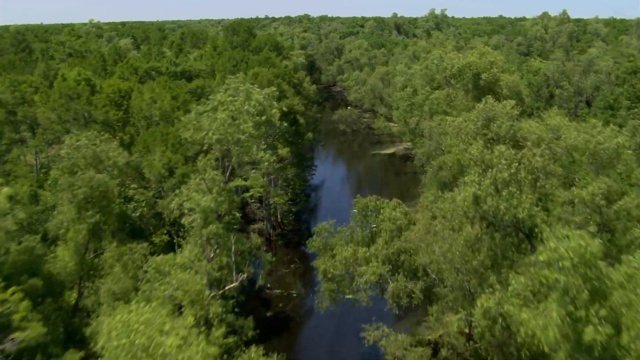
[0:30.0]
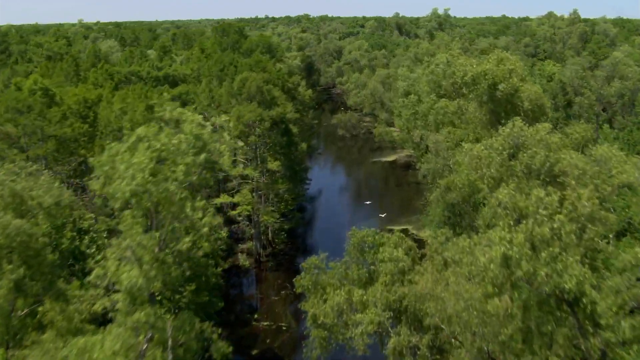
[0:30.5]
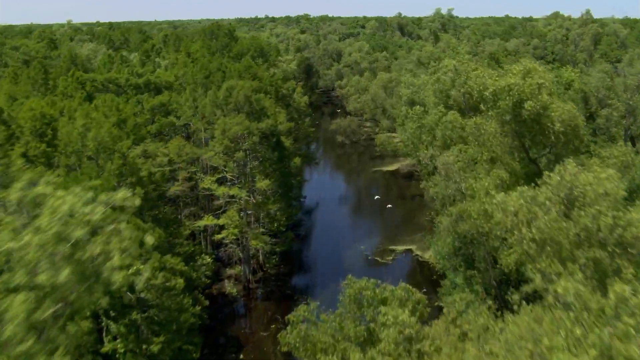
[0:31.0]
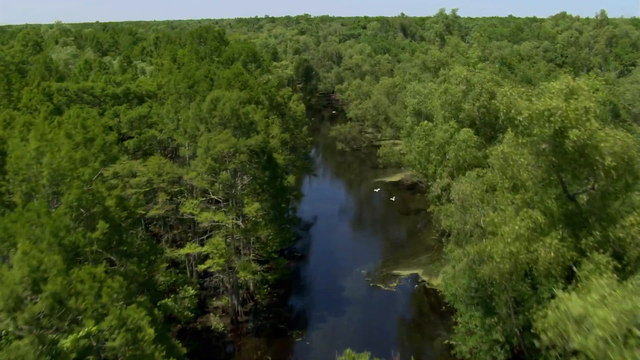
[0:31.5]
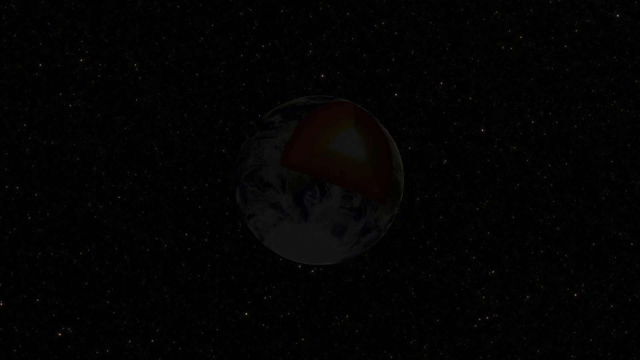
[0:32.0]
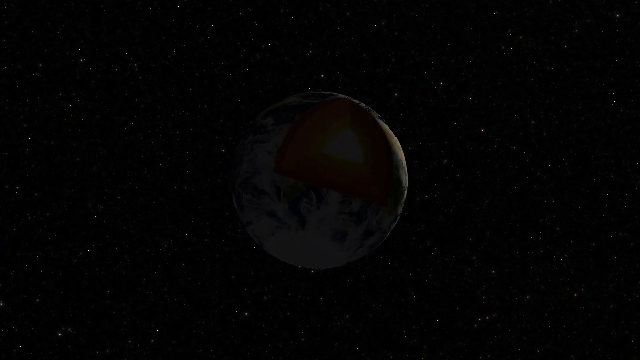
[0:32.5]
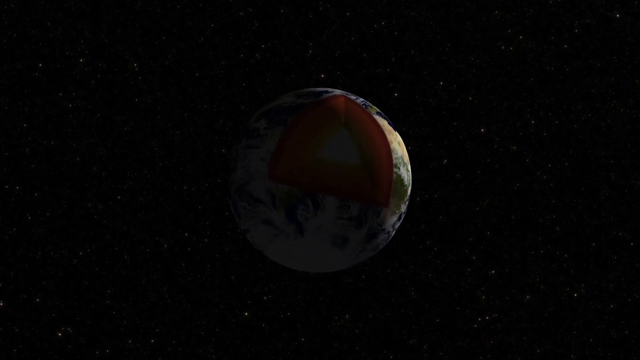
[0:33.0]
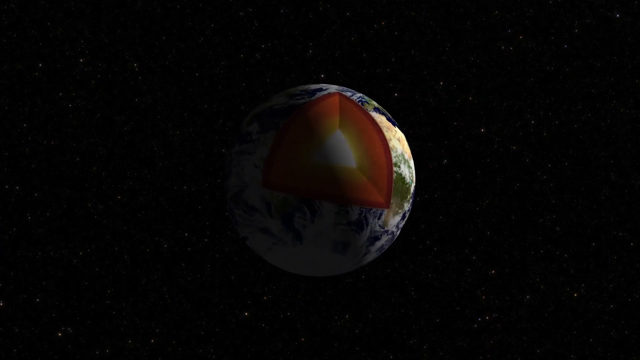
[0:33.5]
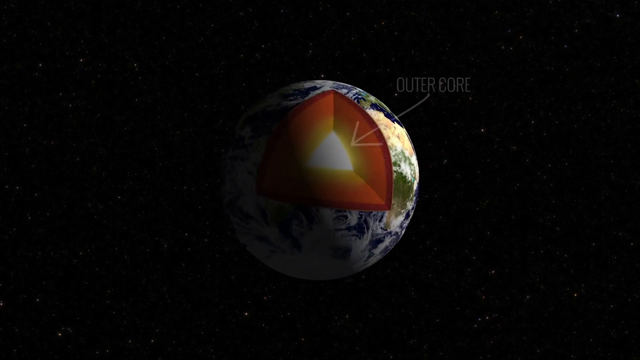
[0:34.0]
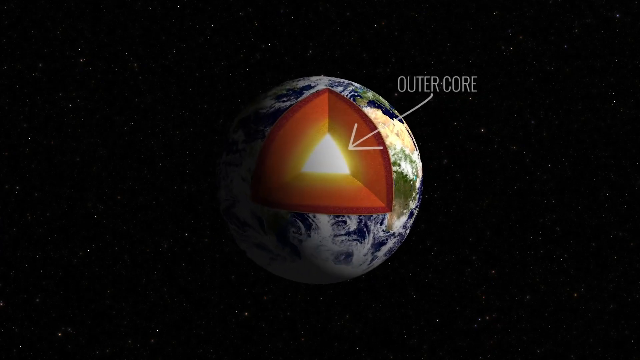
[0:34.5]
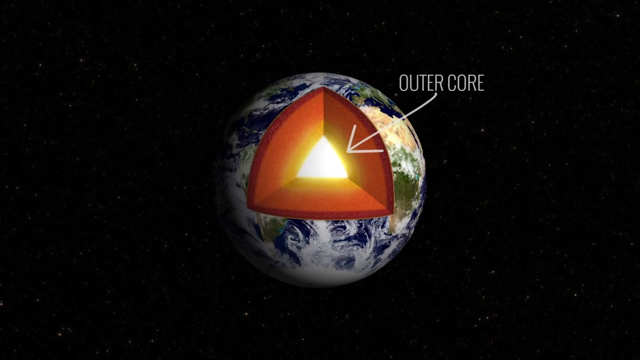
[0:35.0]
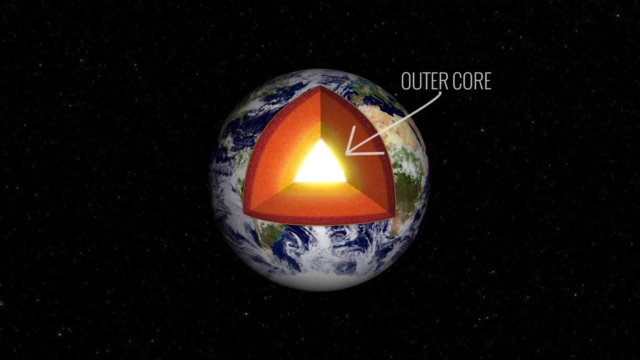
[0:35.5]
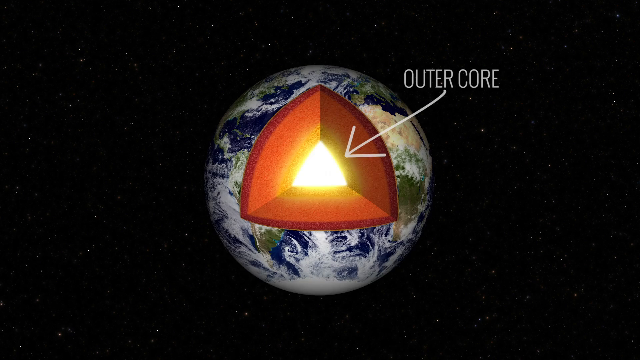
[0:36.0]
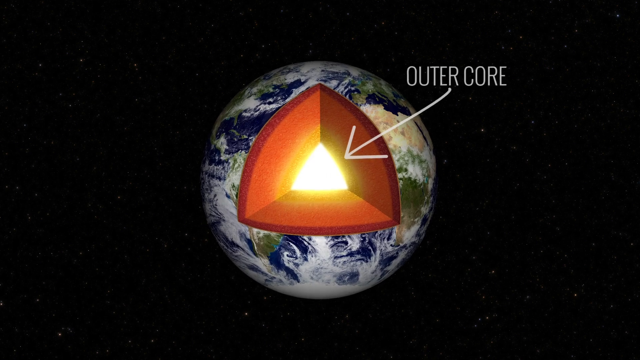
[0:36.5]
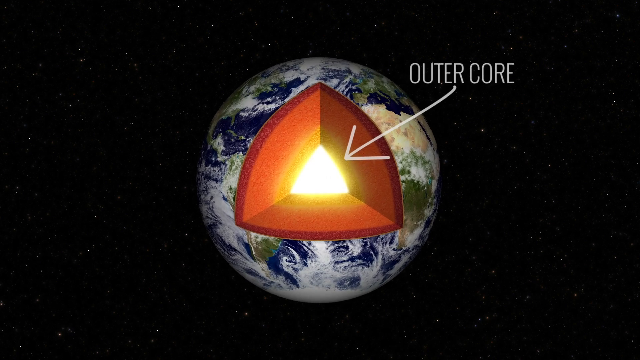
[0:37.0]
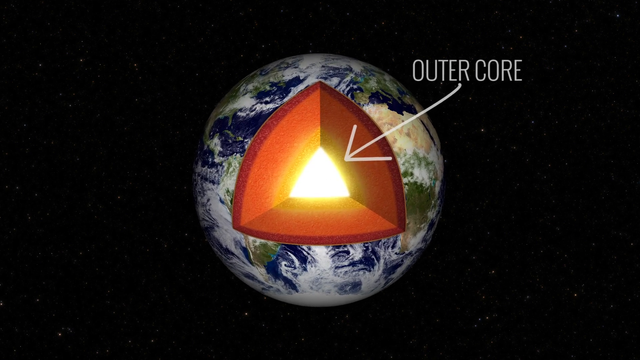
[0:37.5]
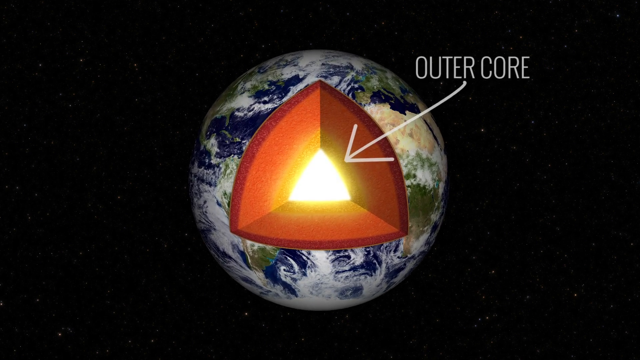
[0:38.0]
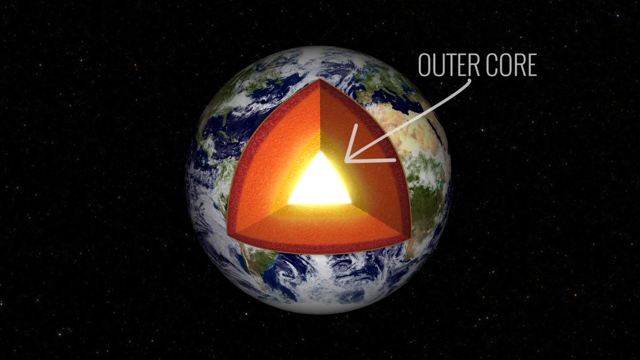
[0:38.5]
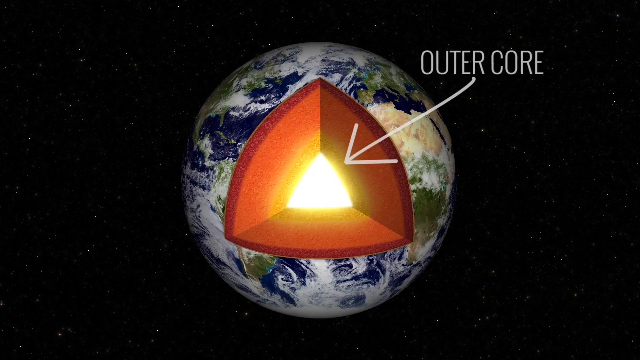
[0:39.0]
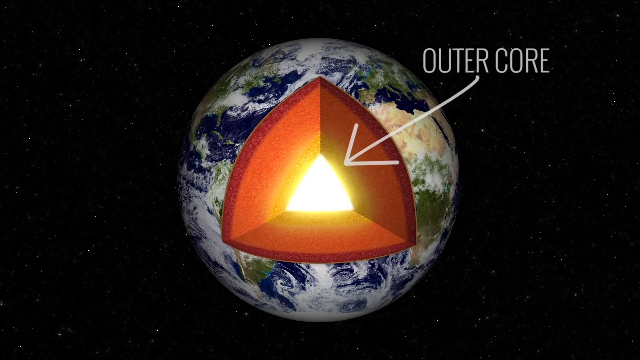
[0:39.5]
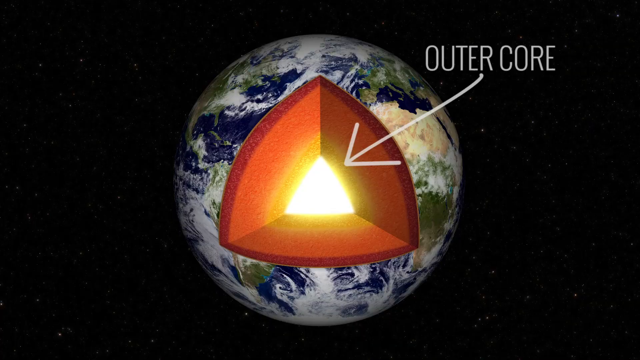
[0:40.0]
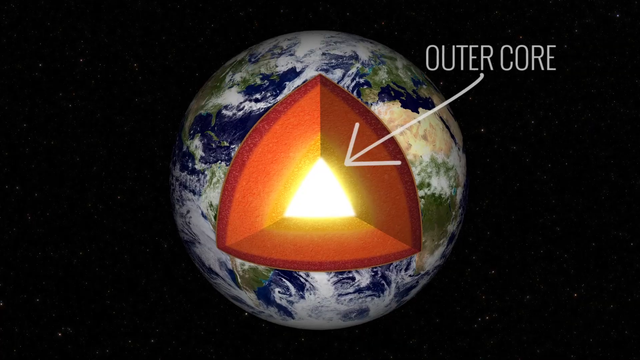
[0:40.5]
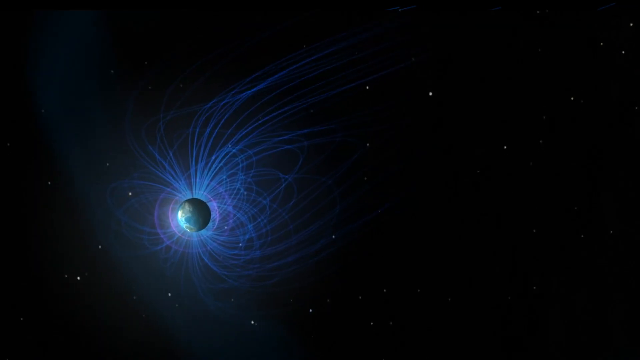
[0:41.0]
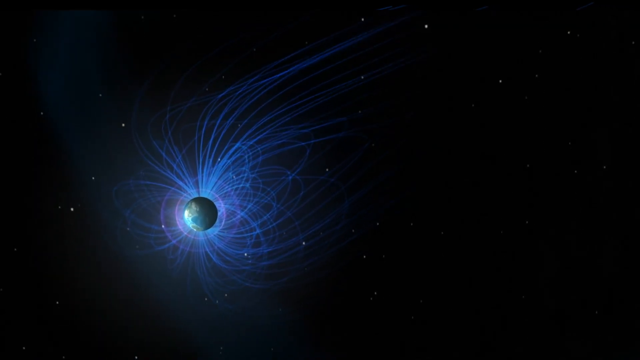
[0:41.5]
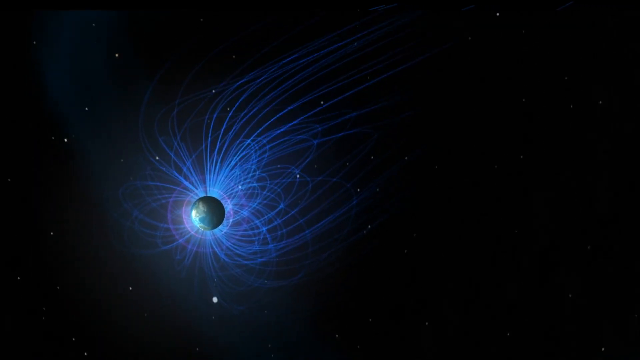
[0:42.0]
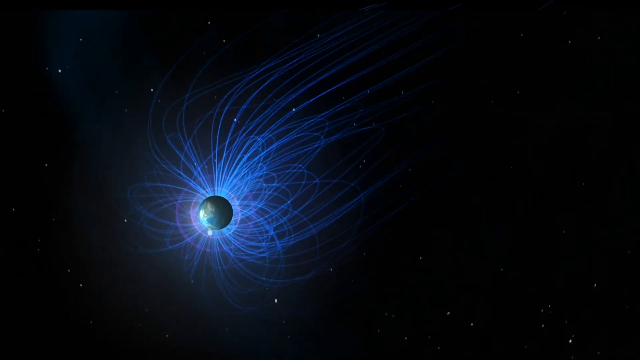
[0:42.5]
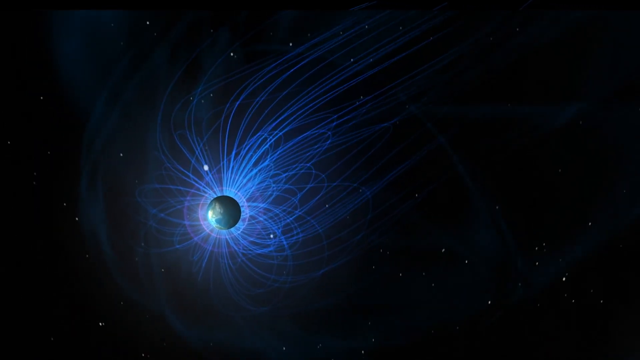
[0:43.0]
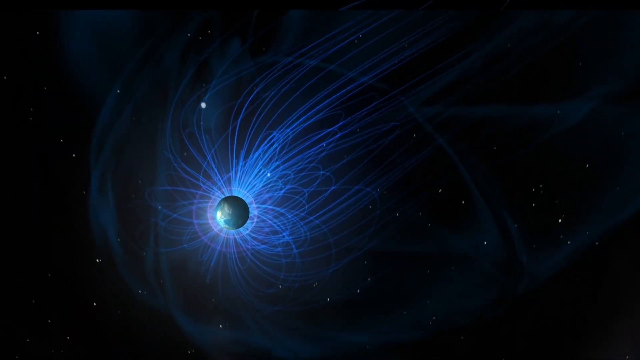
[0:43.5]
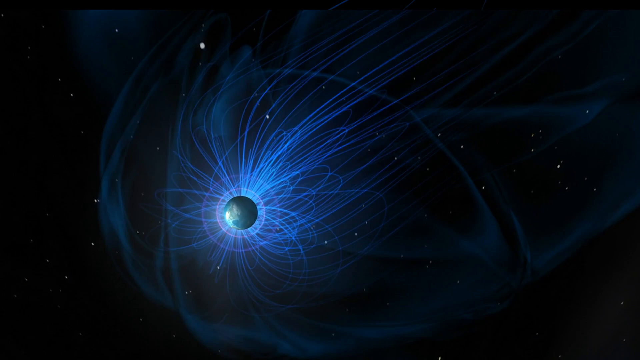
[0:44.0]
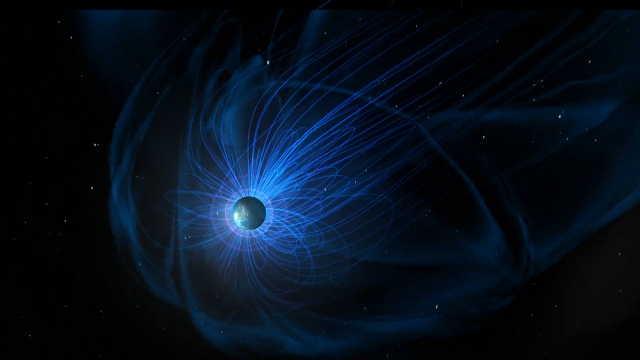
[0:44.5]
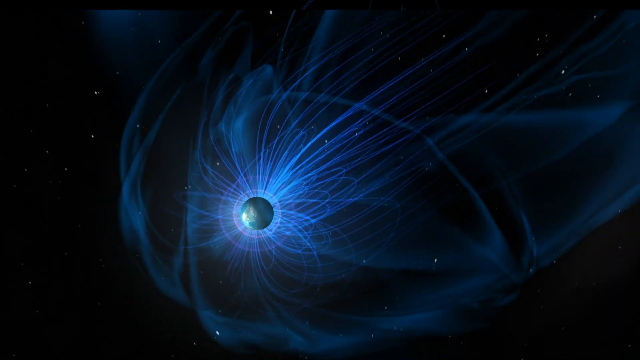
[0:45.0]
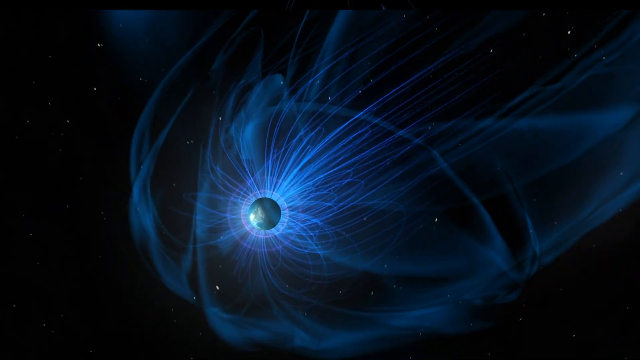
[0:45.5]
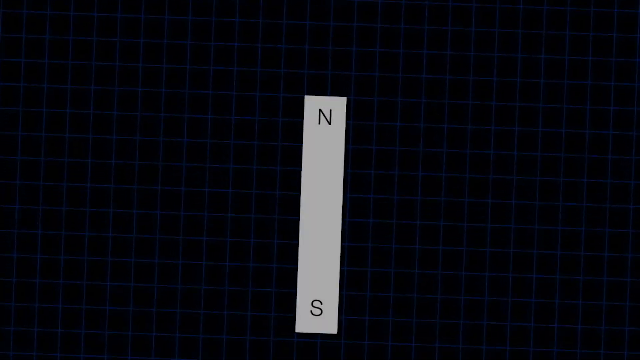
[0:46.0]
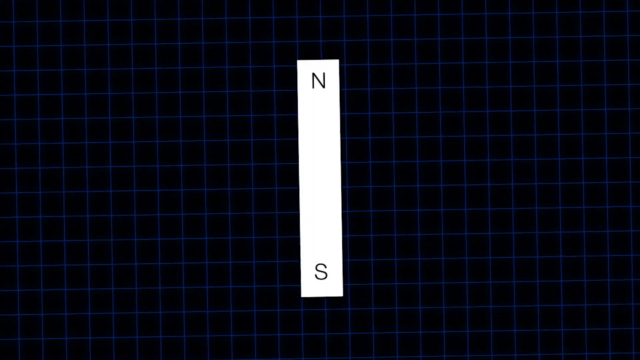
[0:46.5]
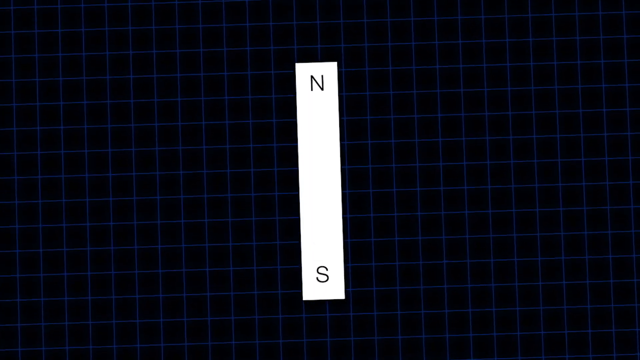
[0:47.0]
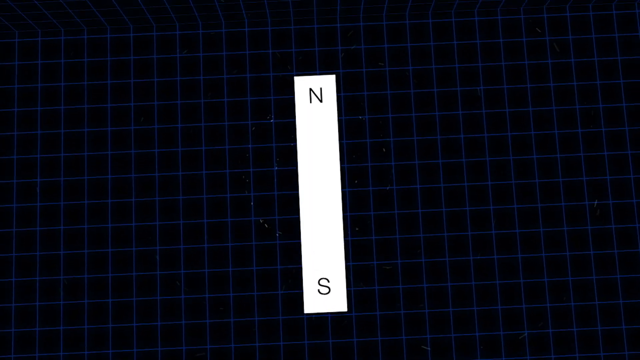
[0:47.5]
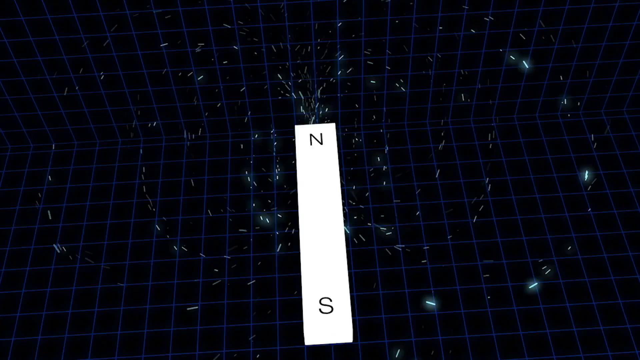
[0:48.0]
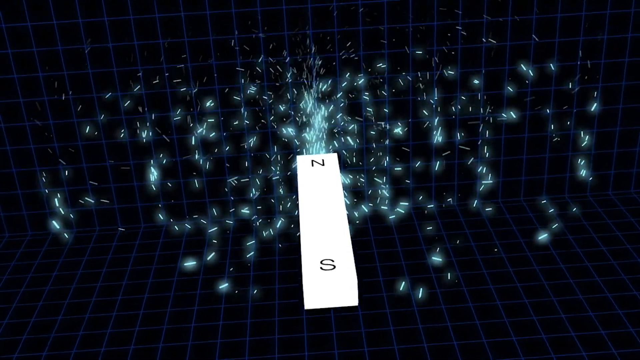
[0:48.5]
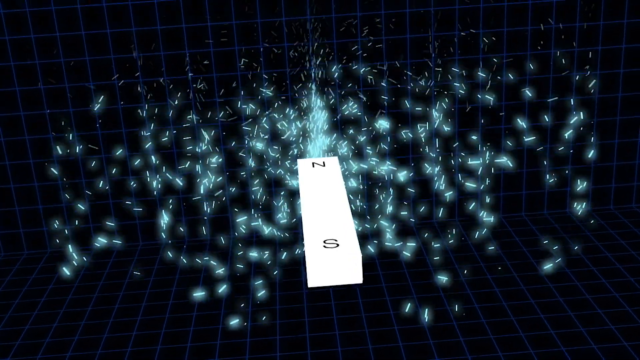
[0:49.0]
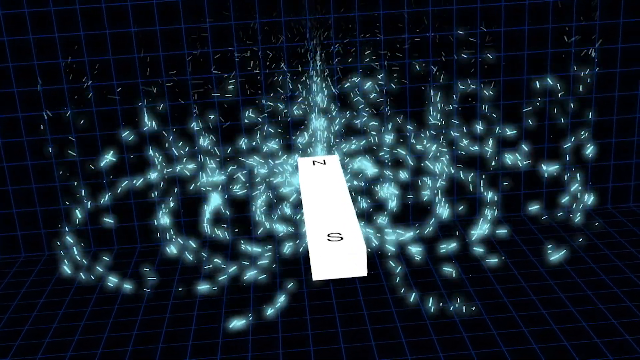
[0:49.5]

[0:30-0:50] A dense green forest has a river running down through its middle, with a couple of white birds flying over the forest, and the camera continues to pan forward along the river deeper into the forest. Next, the Earth slowly rotates, its surface showing a mix of water, land and white swirls of clouds. A section is cut out of the Earth to visualize what is inside: a thin layer of dark red for the crust, a layer of orange beneath it, then yellow, and a bright yellow-white in the very middle, which an arrow labels as the "inner core". The video zooms in slightly on the inner core. Next, Earth floats in space against a dark background with a couple of stars, surrounded by several dark blue lines; the video slightly rotates and pans around Earth. Then a silver rectangle with "N" on one end and "S" on the other shows how a magnetic field forms.